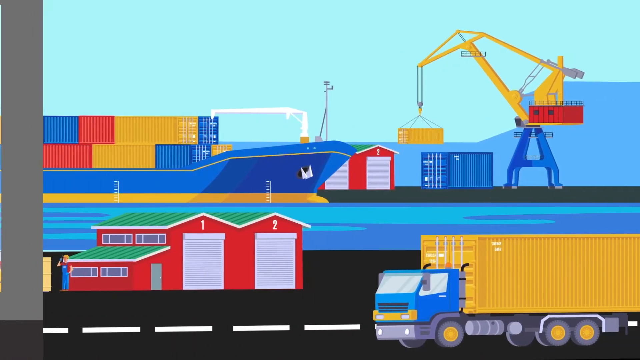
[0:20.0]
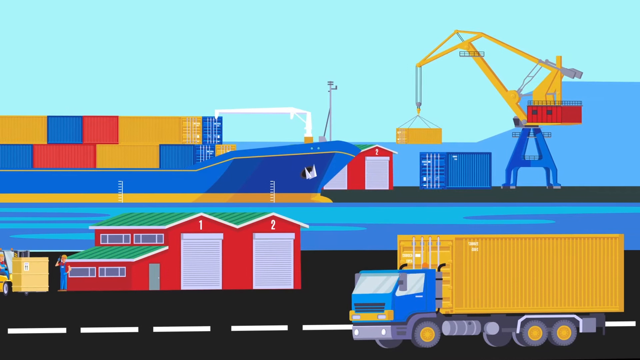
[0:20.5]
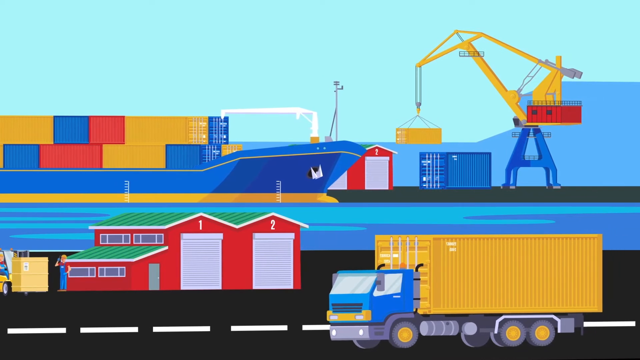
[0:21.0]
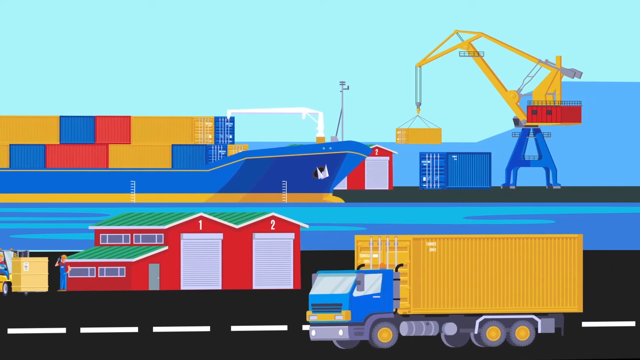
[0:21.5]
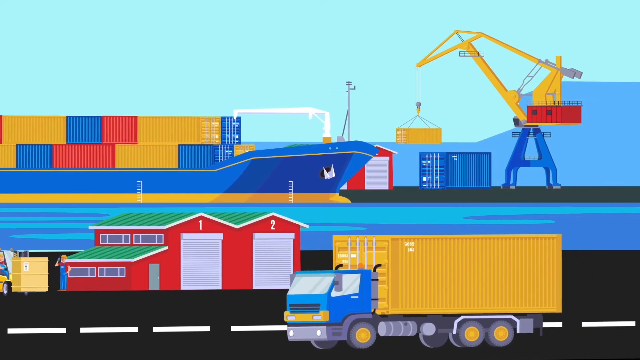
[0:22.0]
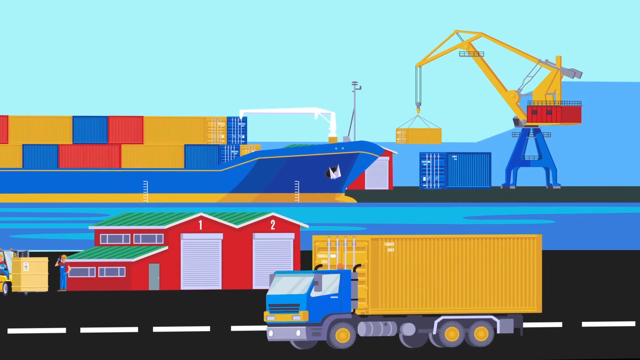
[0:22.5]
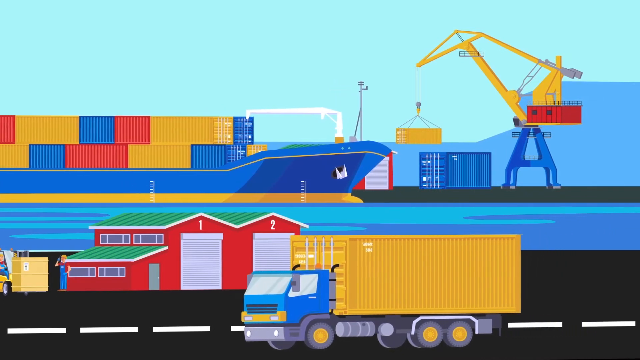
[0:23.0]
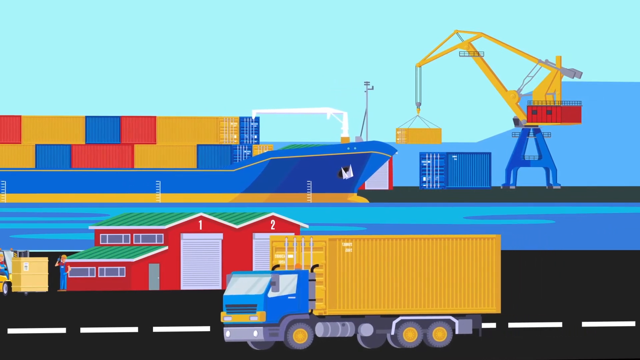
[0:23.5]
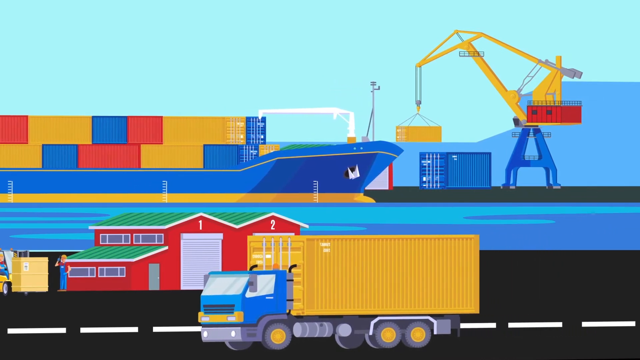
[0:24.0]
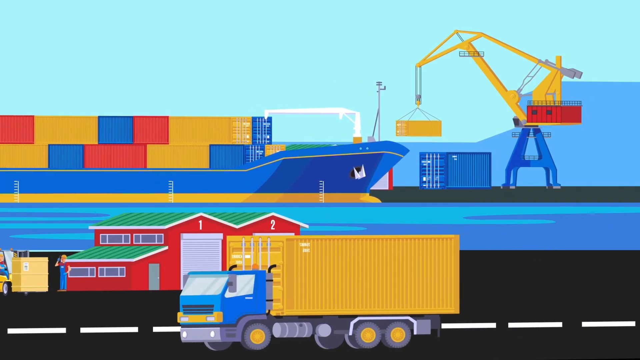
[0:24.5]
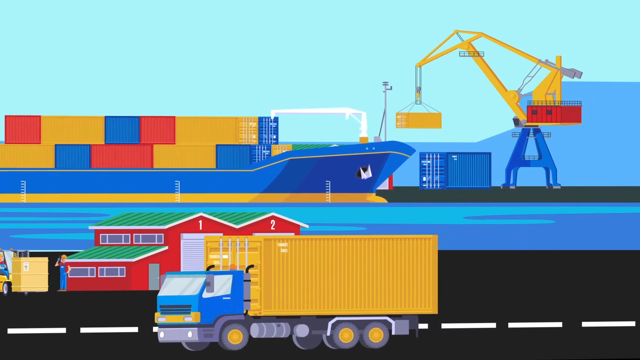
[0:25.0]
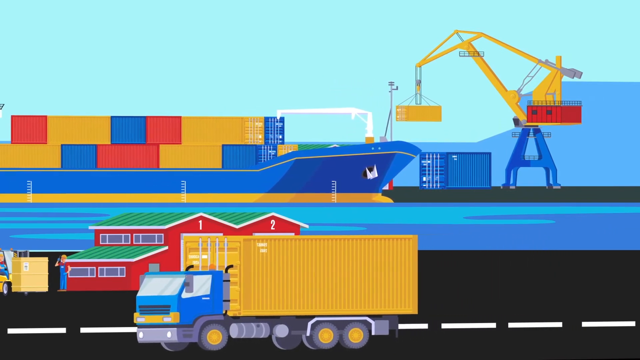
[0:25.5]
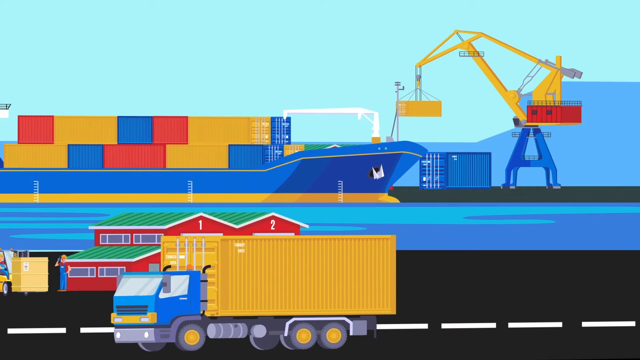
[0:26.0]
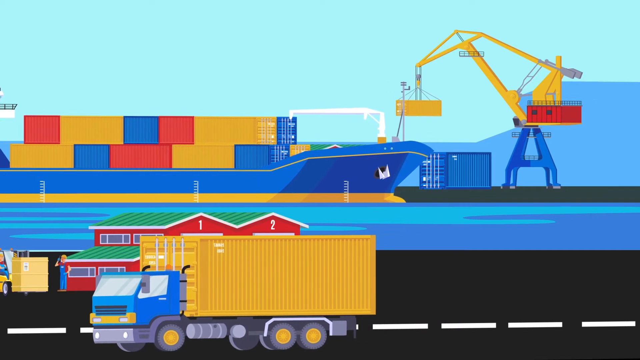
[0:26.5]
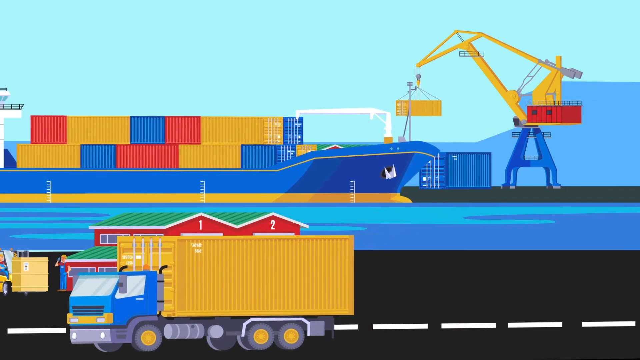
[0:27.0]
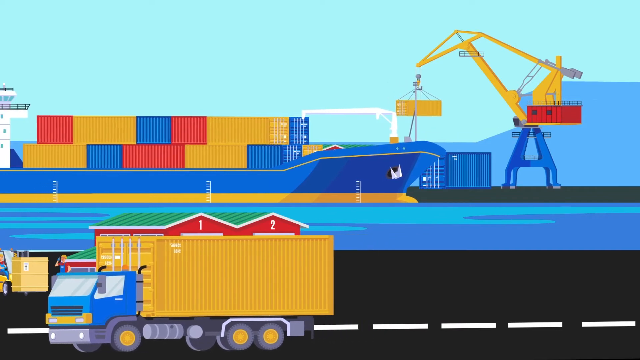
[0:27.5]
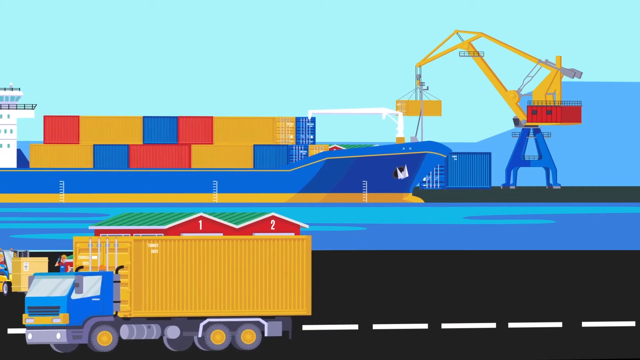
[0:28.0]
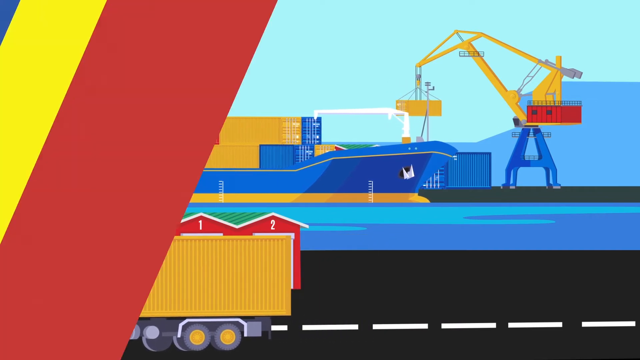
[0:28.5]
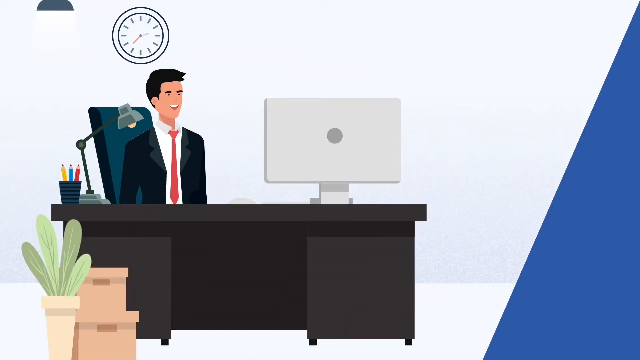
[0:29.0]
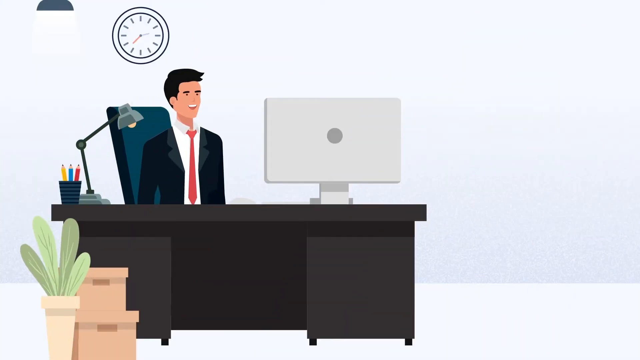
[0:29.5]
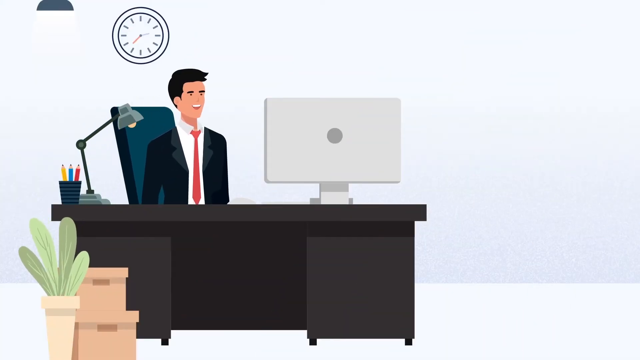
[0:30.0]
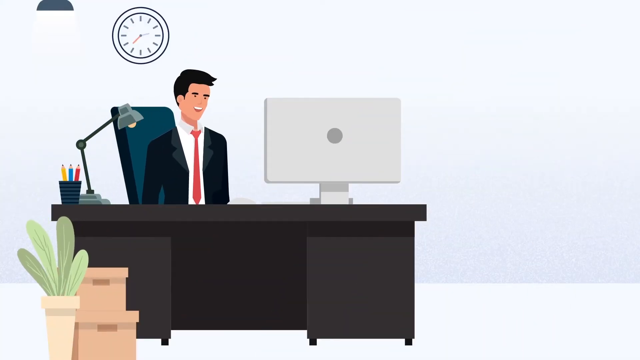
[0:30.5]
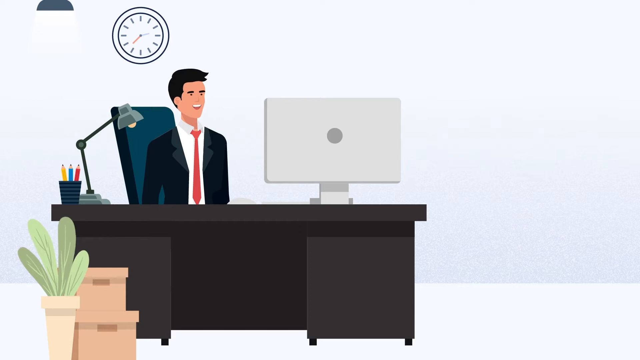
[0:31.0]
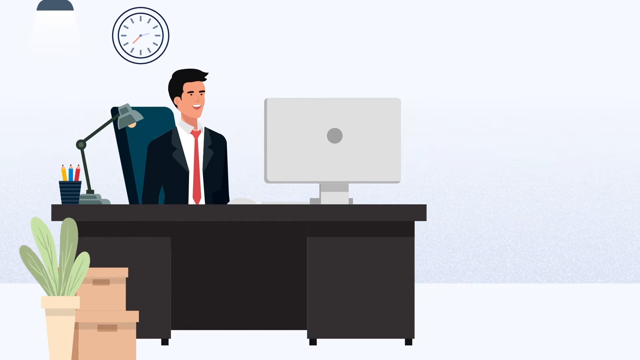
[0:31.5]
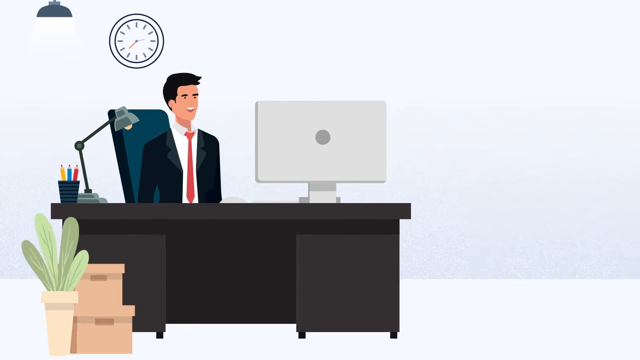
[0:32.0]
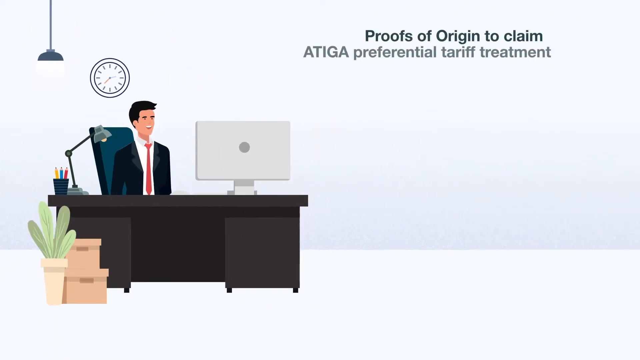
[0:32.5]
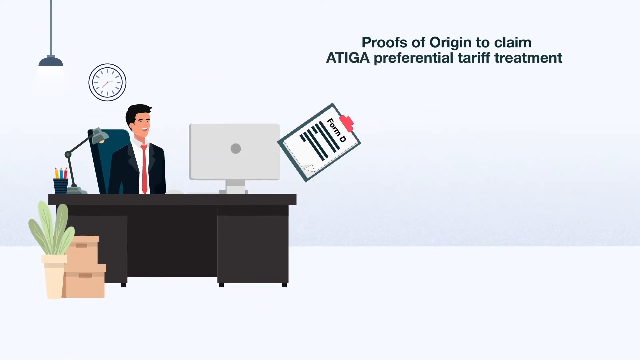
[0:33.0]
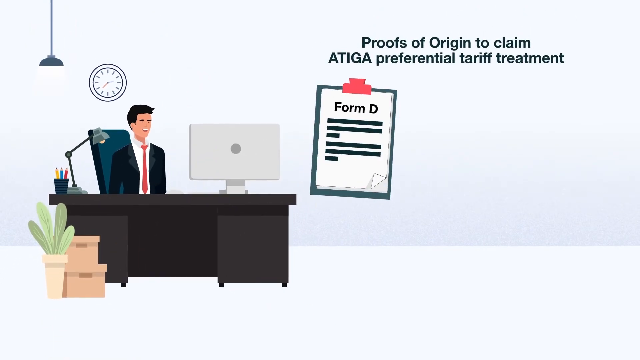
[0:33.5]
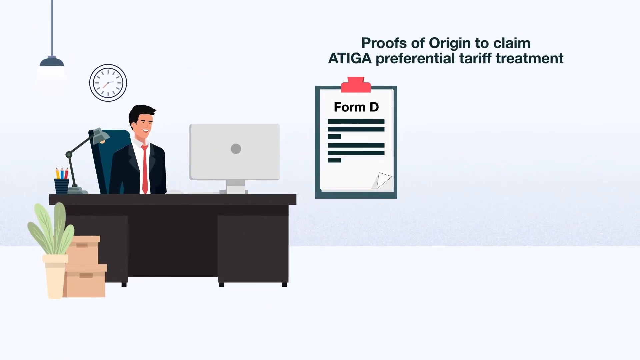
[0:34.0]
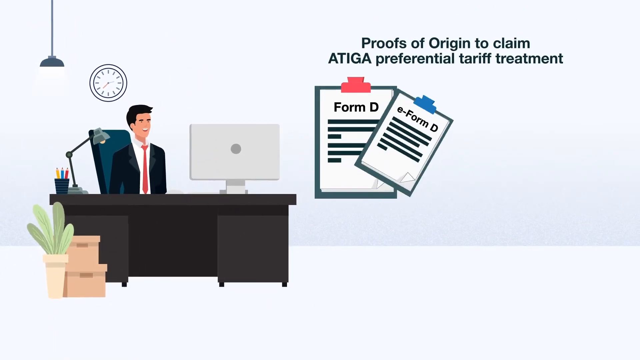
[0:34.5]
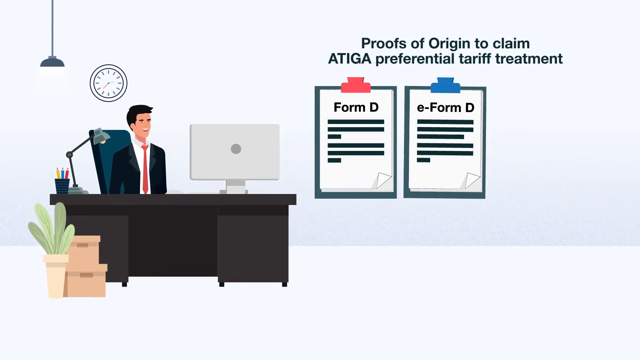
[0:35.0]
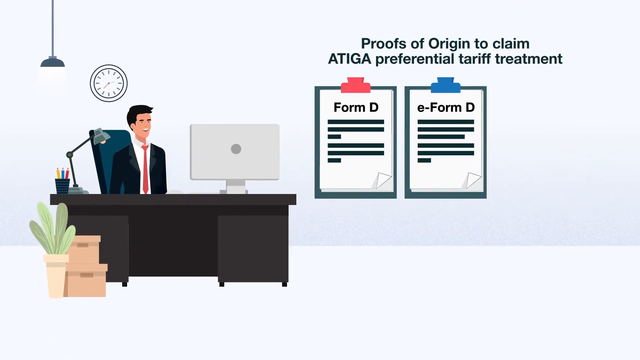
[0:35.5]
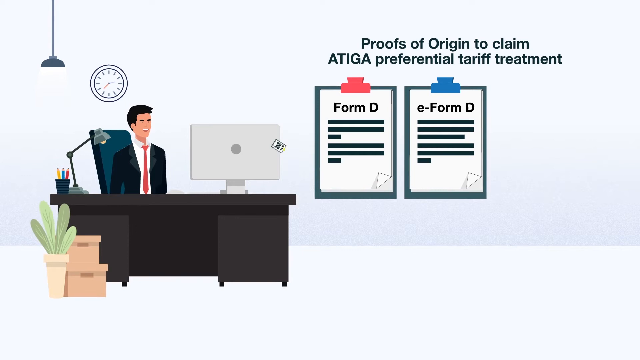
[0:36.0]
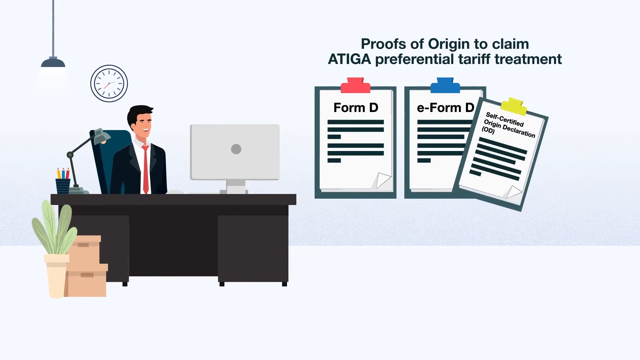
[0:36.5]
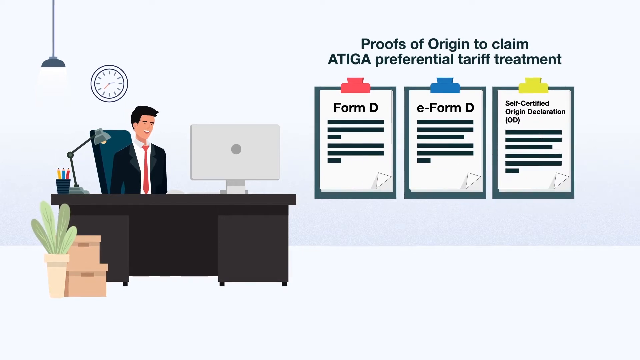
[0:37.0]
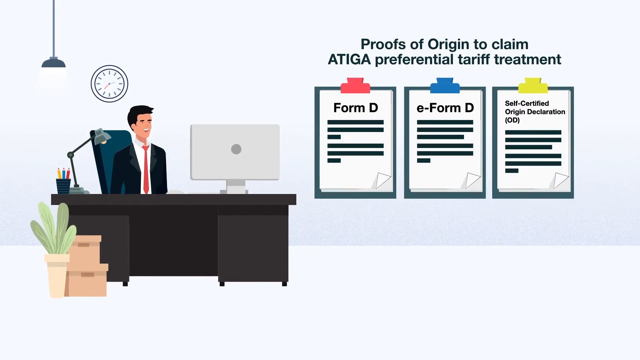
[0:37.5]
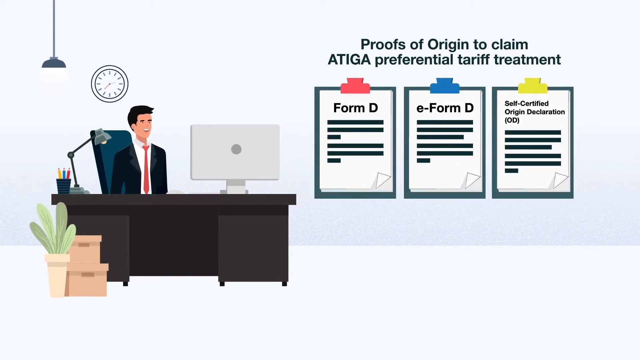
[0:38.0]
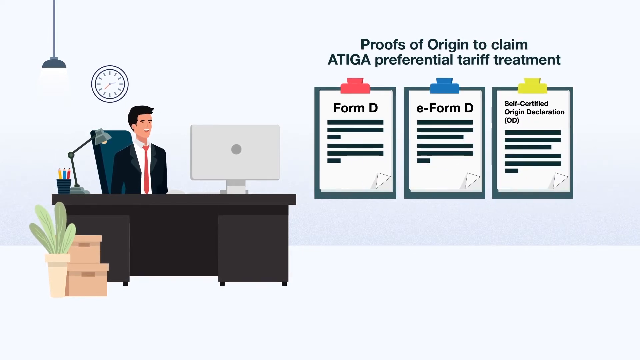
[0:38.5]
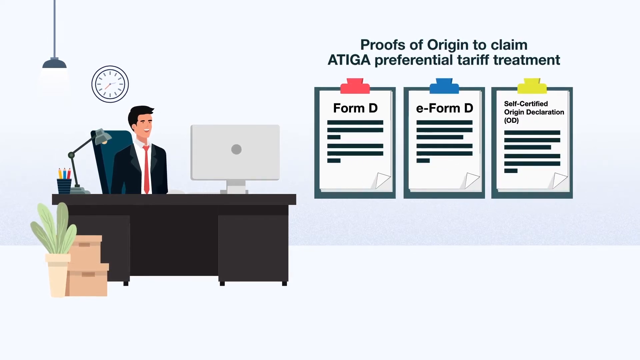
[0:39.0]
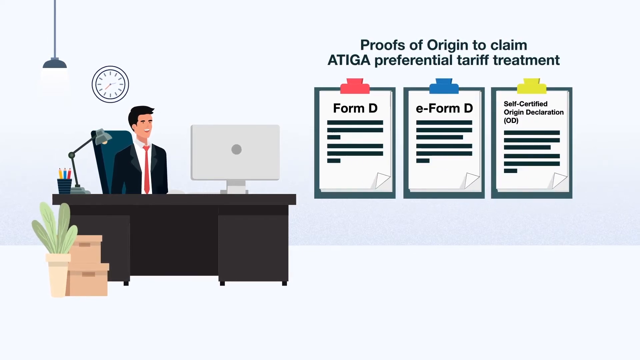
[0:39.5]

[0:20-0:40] The animation shows the setting in more detail: a port with ships, trucks and warehouses, containers of different colors, and cranes, apparently related to maritime transport logistics. A character dressed in a formal suit with a red tie is at his desk in front of a monitor. Behind him on the white wall there is a clock; there is a lamp next to him, a small basket with three pencils of different colors, boxes, and a plant decorating the place. The camera moves away a bit to reveal text on the right that reads "Proofs of origin to claim an ATIGA preferential tariff treatment". Three boards appear: the first says "Form D", the second "E Form D", and the third "Self-Certified Origin Declaration, OD".